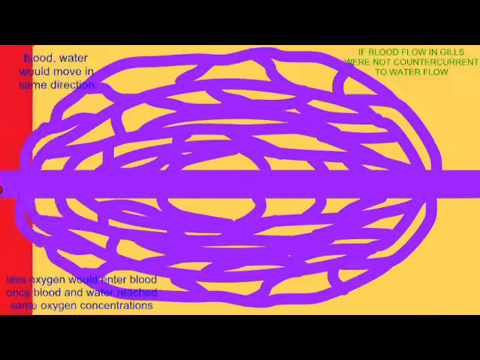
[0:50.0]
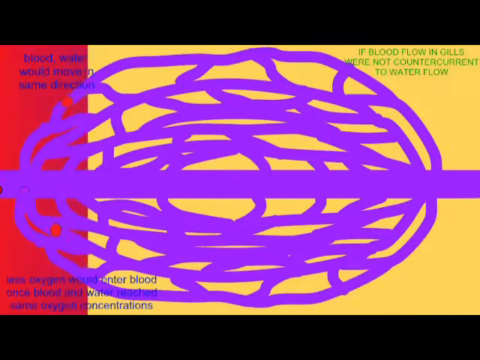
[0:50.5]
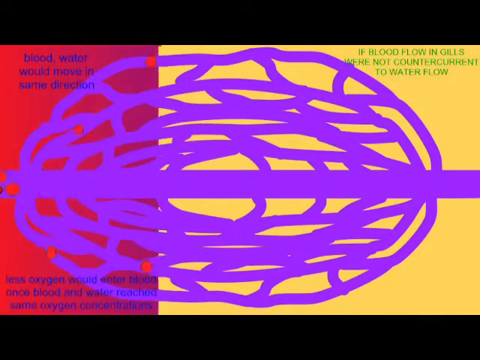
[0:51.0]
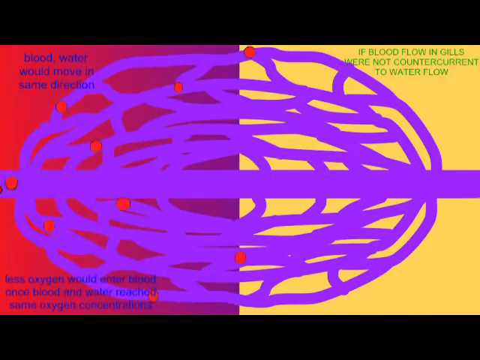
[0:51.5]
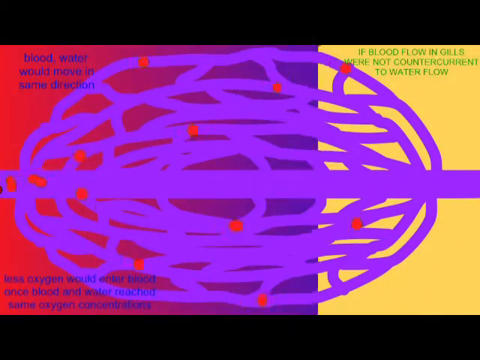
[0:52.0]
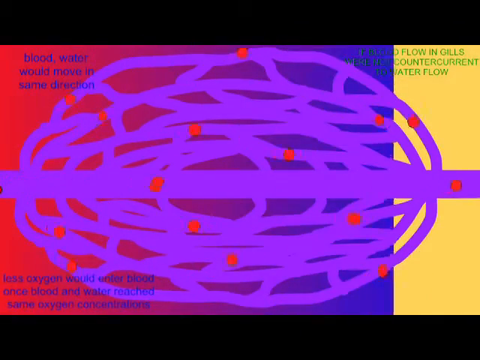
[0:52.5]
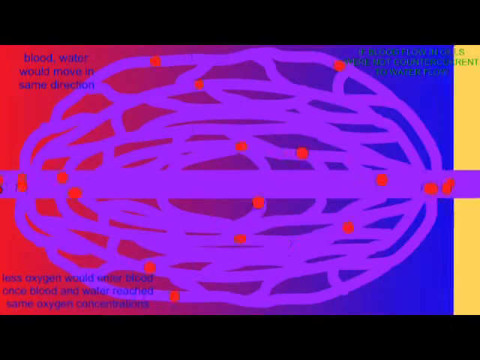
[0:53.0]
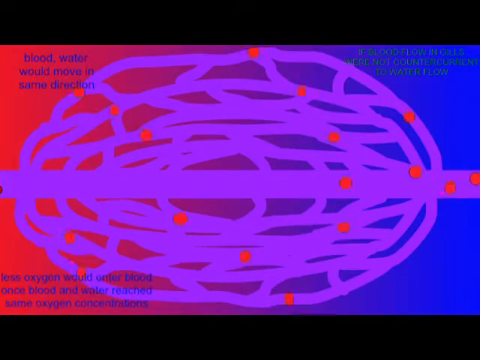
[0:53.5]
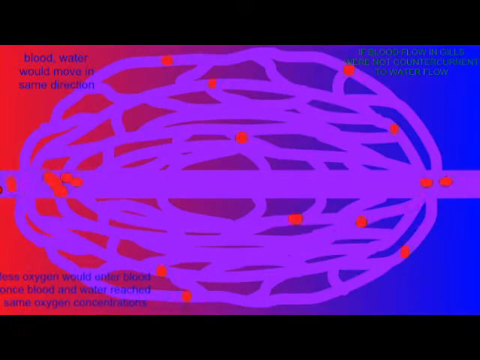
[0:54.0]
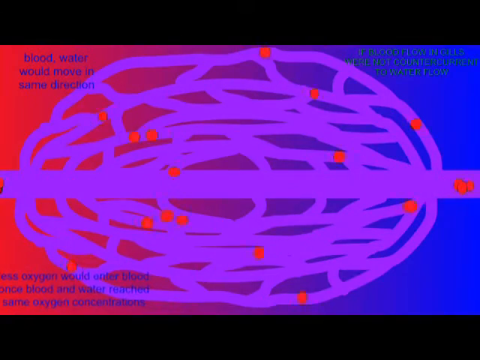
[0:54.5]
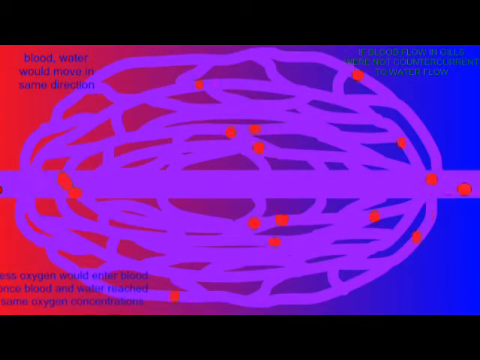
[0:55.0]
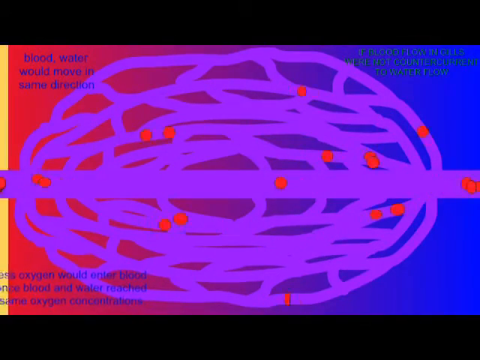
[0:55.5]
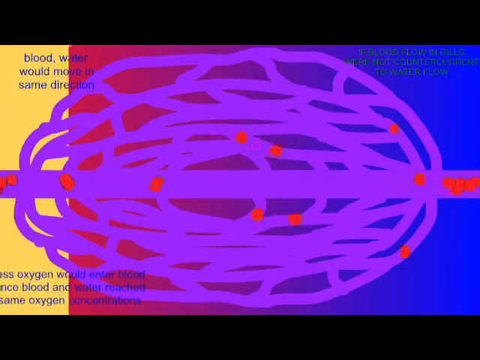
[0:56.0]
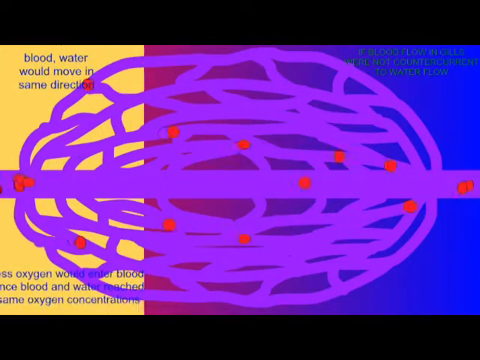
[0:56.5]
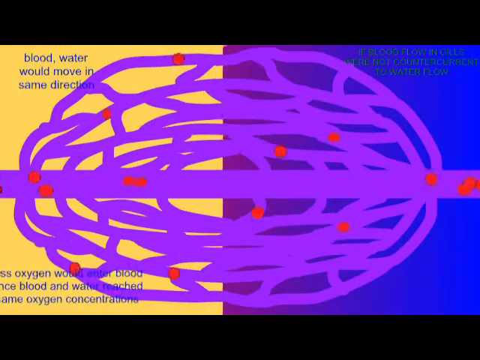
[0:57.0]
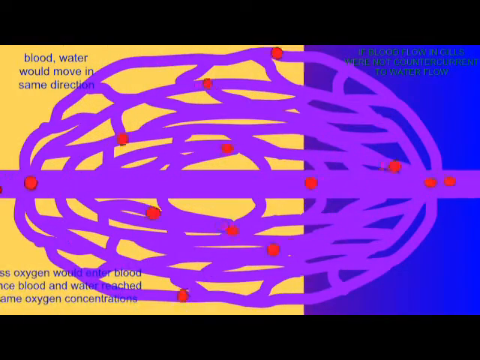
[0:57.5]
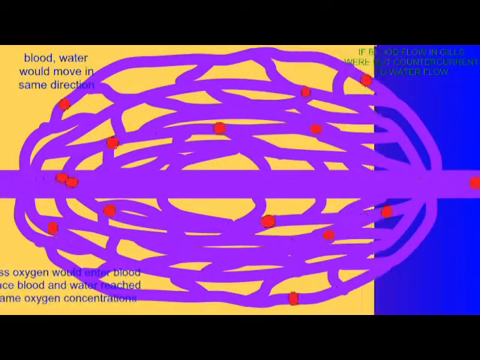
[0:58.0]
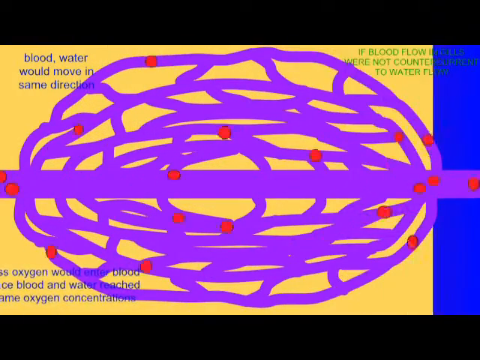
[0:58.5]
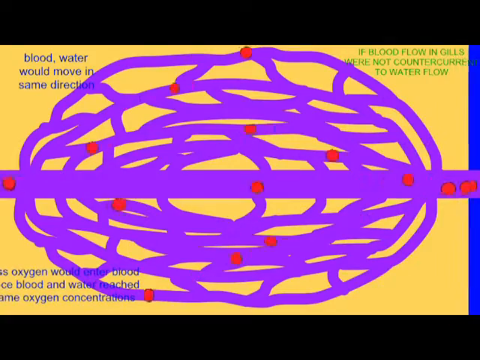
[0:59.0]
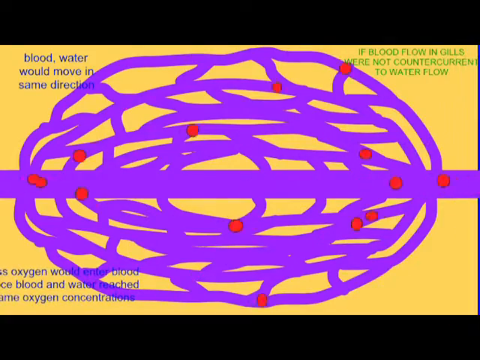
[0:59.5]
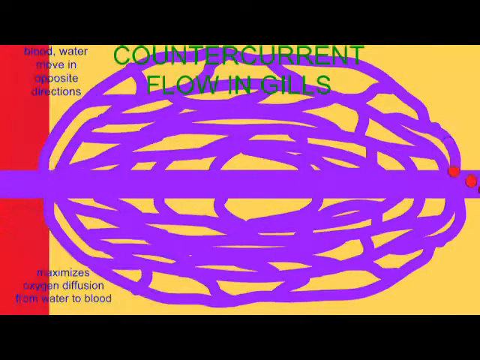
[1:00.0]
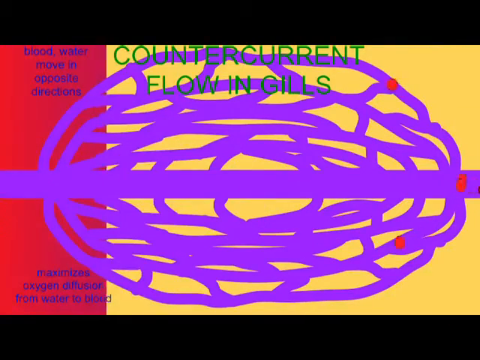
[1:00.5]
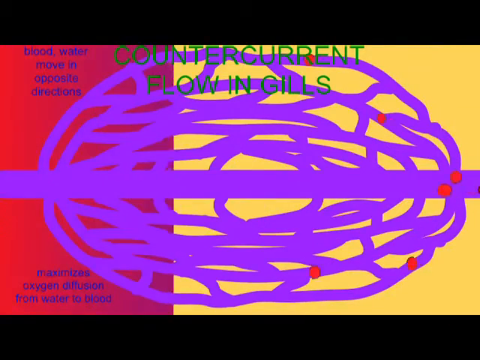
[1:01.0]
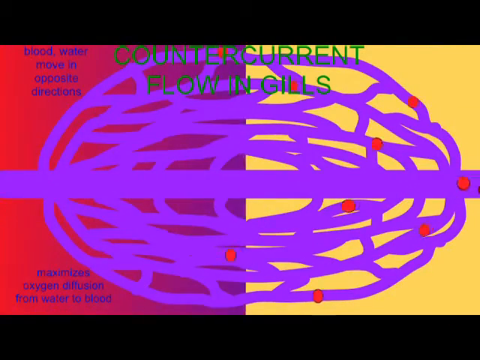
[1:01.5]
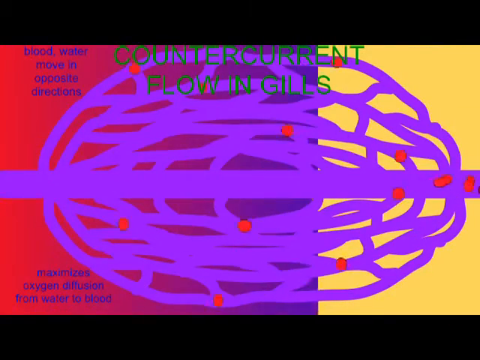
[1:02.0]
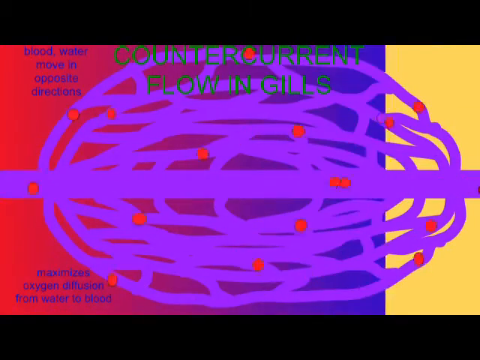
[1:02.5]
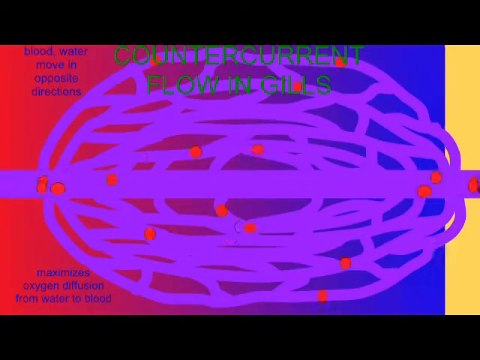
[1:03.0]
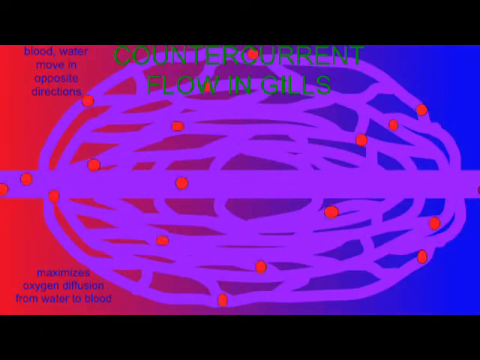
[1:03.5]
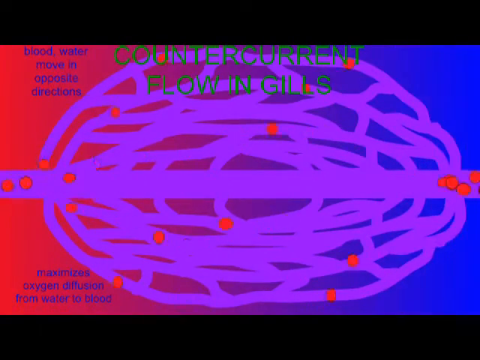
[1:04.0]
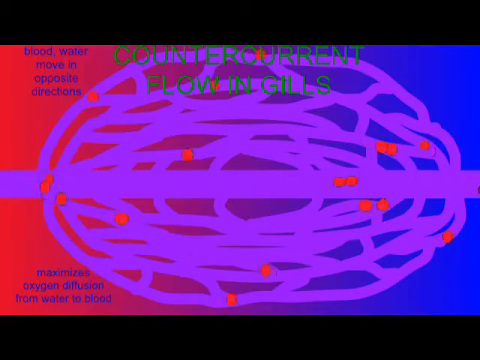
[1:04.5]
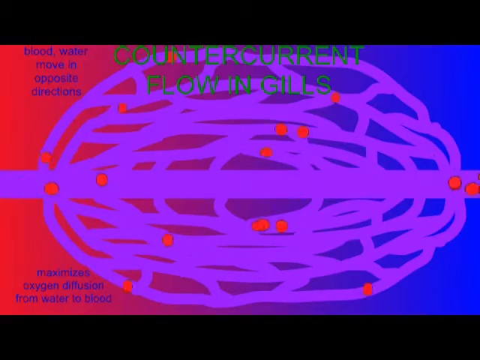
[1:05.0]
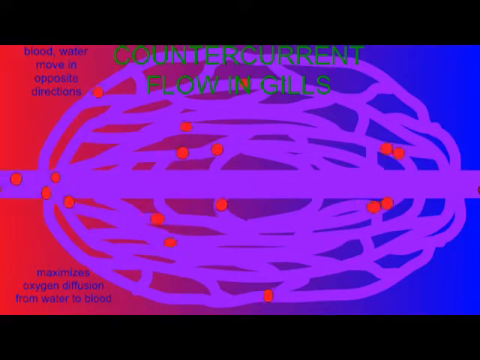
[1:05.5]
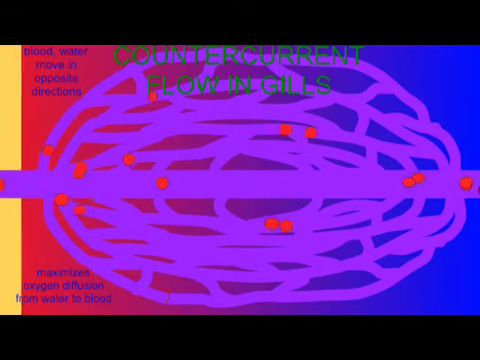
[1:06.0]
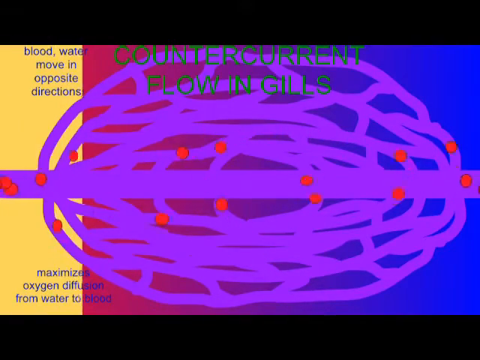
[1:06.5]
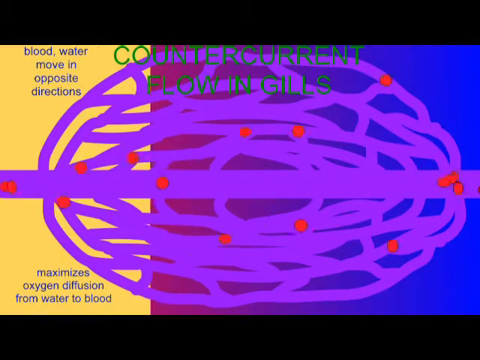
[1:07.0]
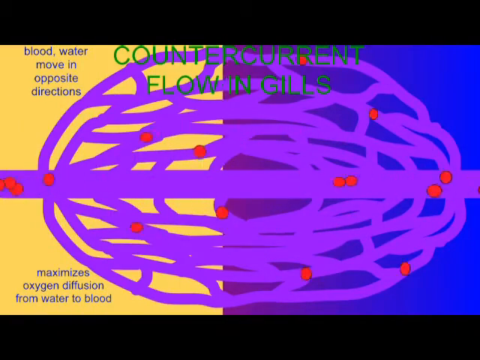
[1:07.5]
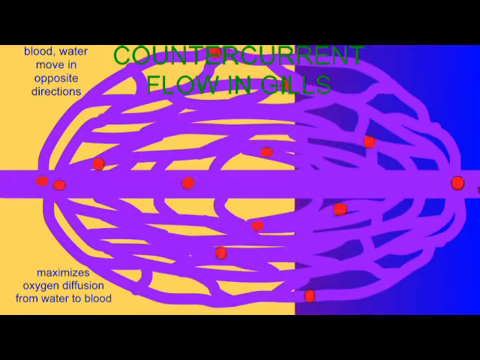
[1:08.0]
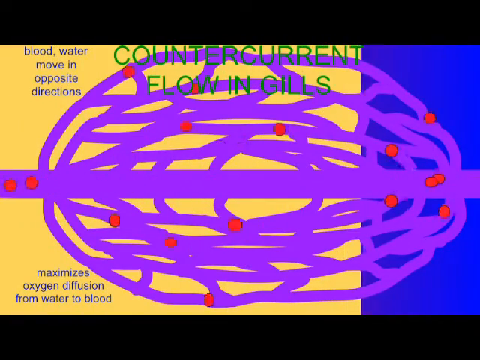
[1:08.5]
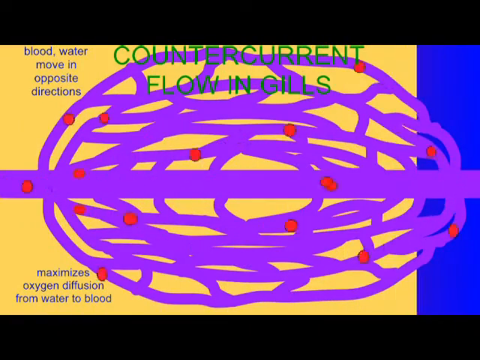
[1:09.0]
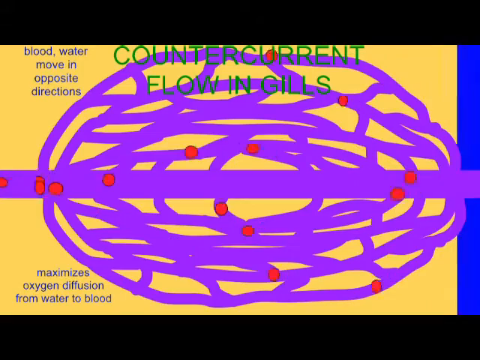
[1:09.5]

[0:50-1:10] The interior of the fish is shown. Text in the top left corner of the screen says "blood water would move in the same direction", and the bottom left corner has text about oxygen, blood and oxygen concentrations that is very blurred and difficult to read. In the center of the screen is a purple diagram of the interior of the gill that looks hand-drawn. The top right corner shows "blood flow in gills" with text about water flow, also difficult to read. The background of the text then changes to red and purple, and the flow of blood and water to the fish's gill is shown again. The diagrams of the gill are hand-drawn.